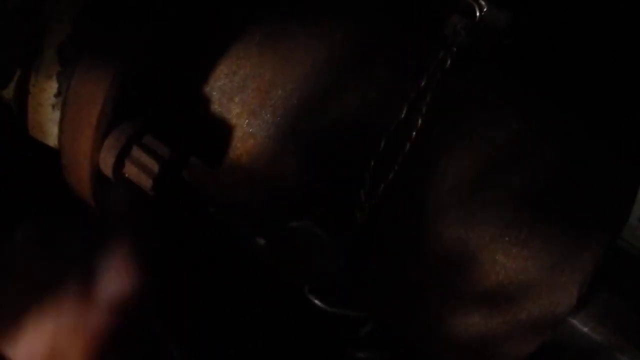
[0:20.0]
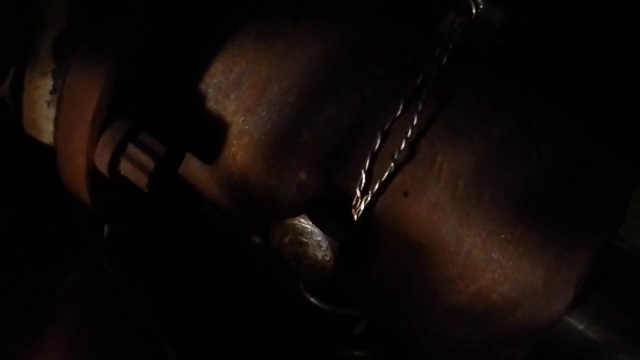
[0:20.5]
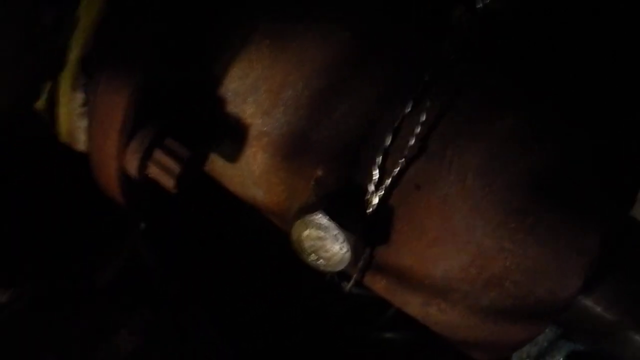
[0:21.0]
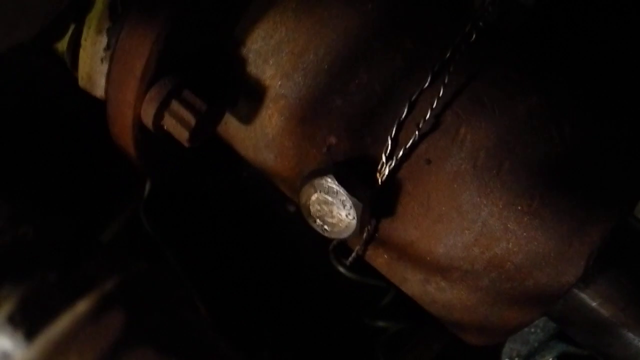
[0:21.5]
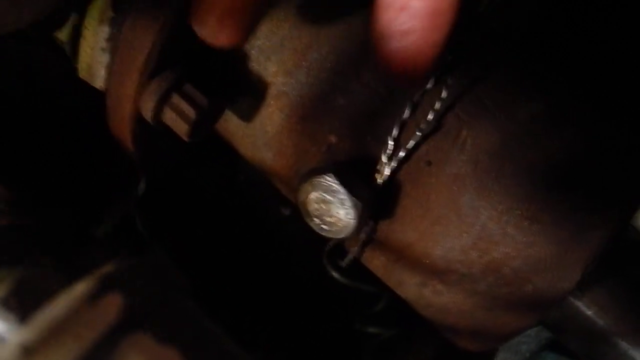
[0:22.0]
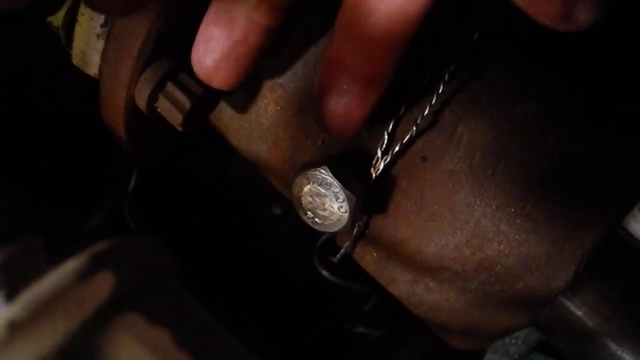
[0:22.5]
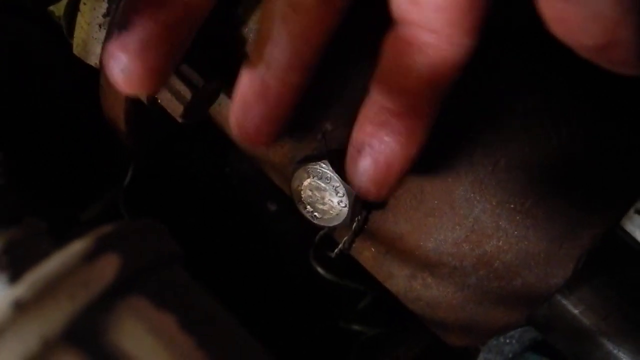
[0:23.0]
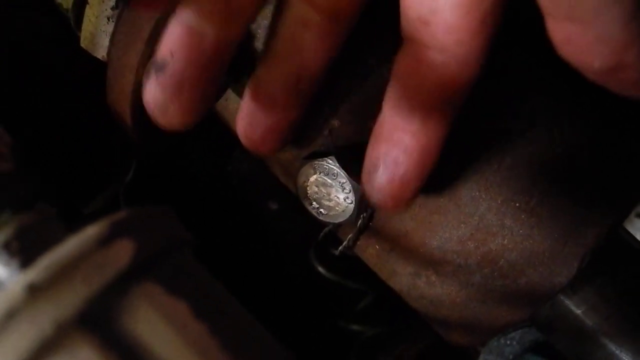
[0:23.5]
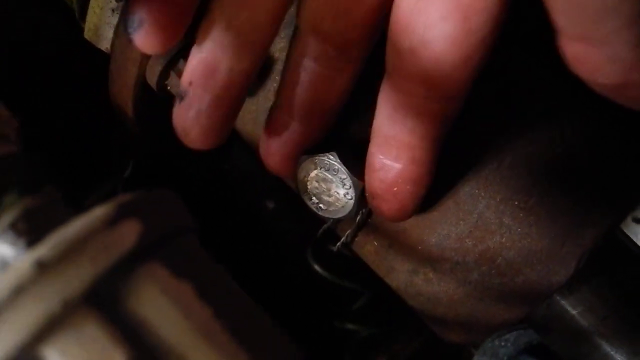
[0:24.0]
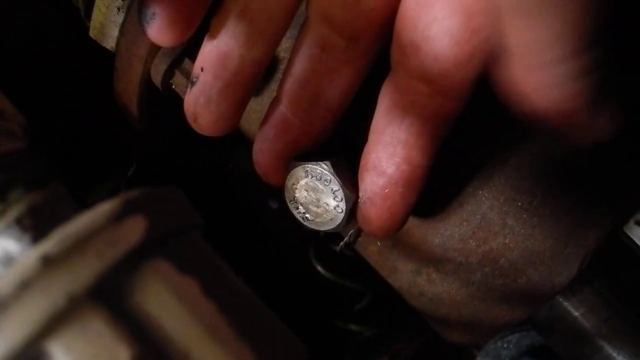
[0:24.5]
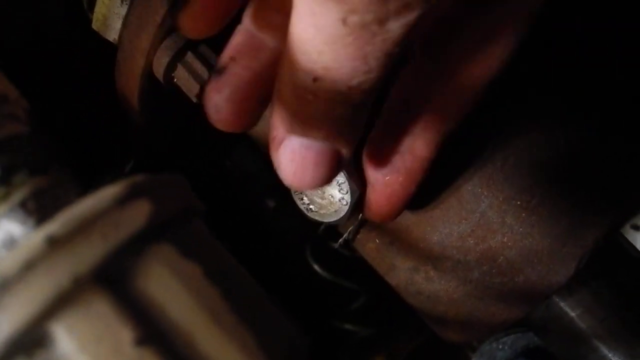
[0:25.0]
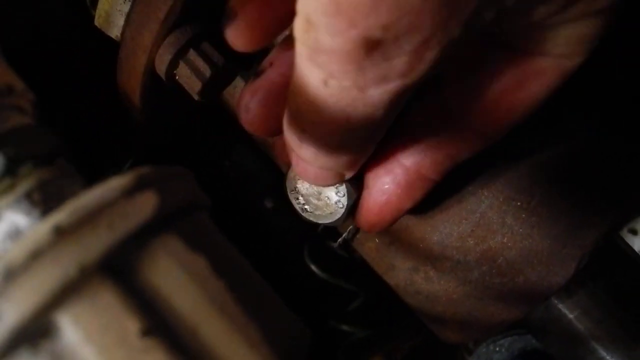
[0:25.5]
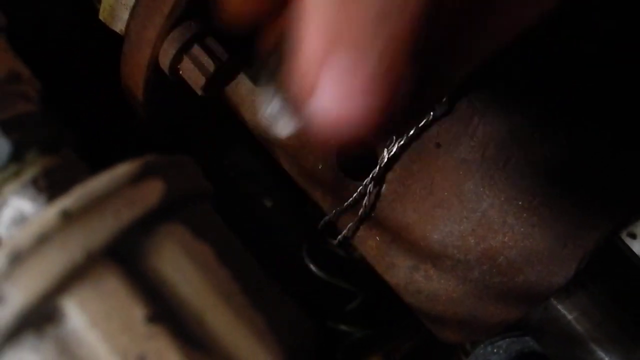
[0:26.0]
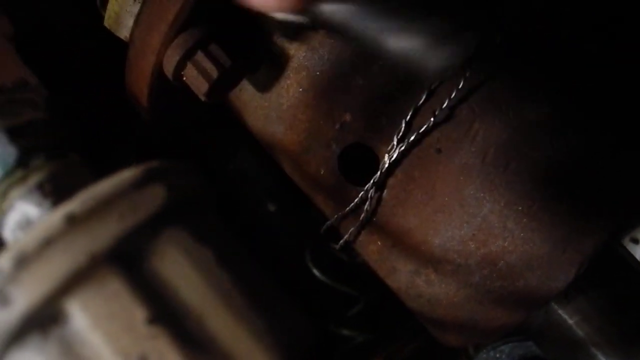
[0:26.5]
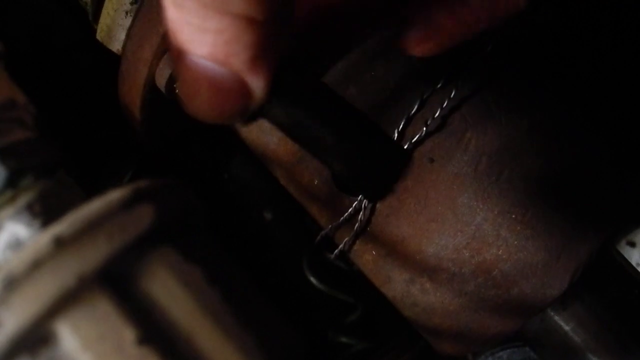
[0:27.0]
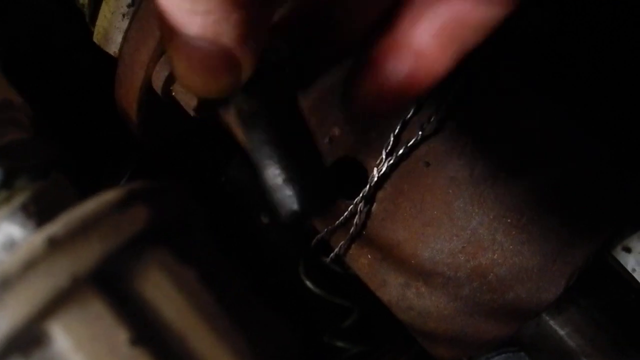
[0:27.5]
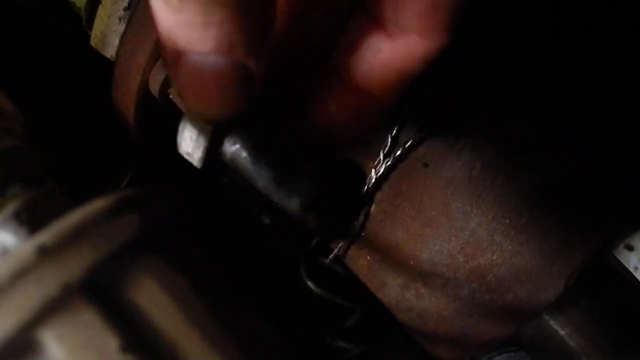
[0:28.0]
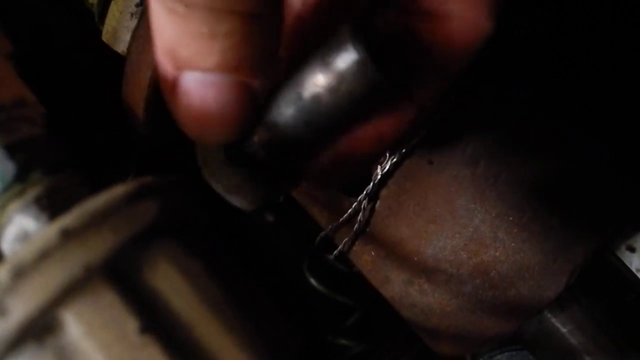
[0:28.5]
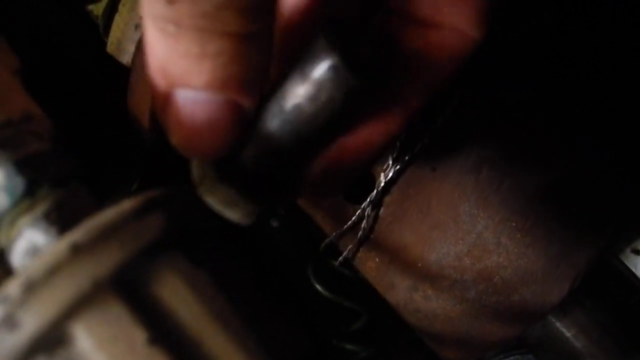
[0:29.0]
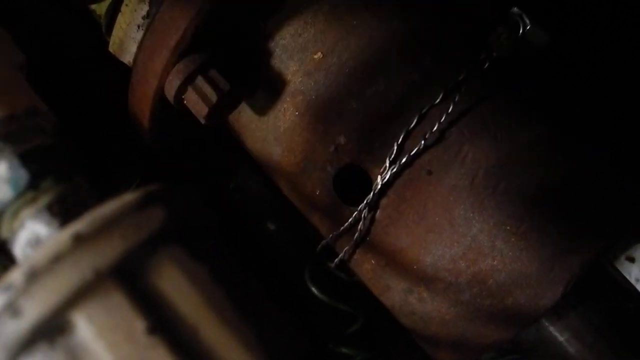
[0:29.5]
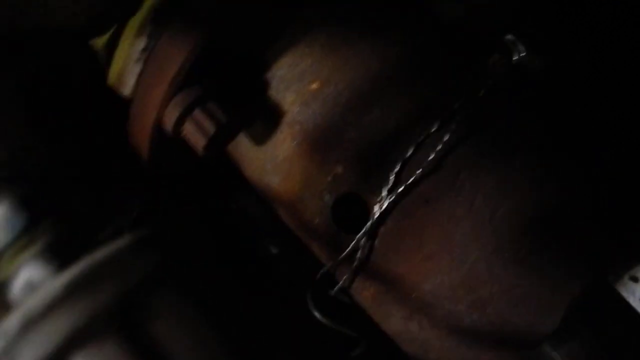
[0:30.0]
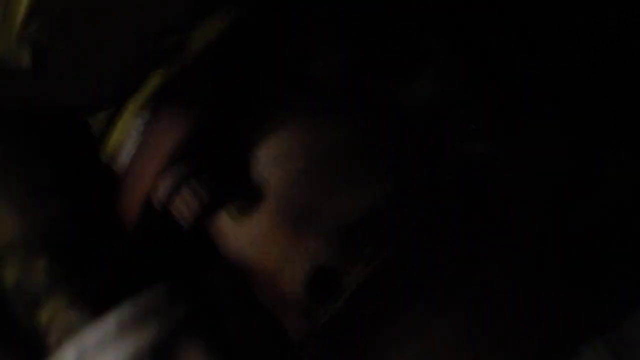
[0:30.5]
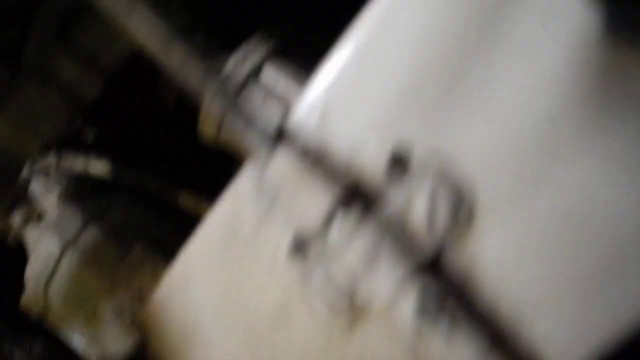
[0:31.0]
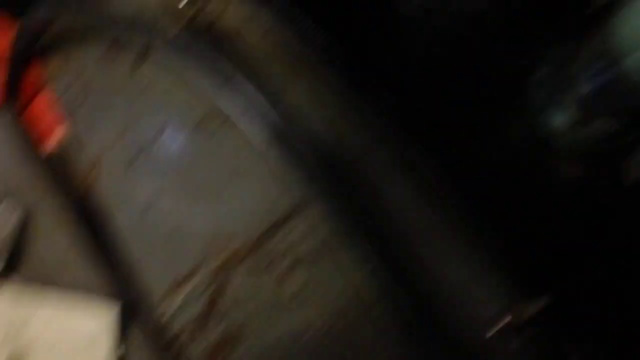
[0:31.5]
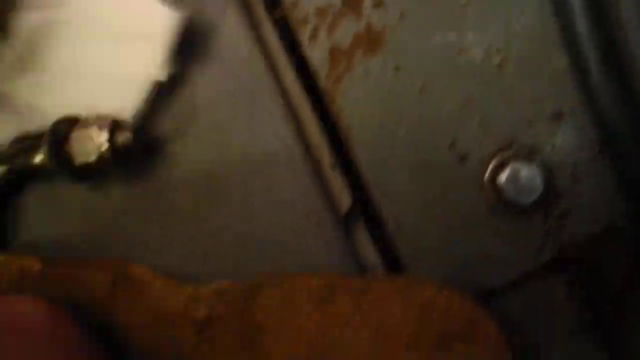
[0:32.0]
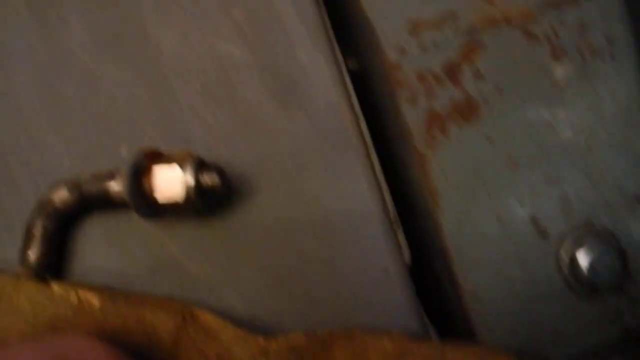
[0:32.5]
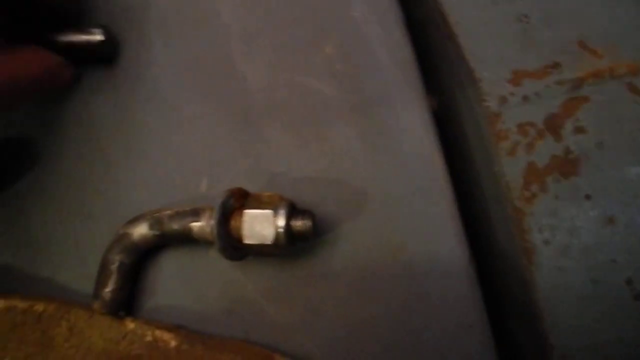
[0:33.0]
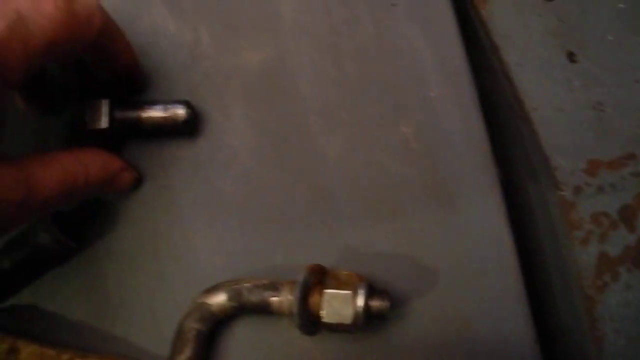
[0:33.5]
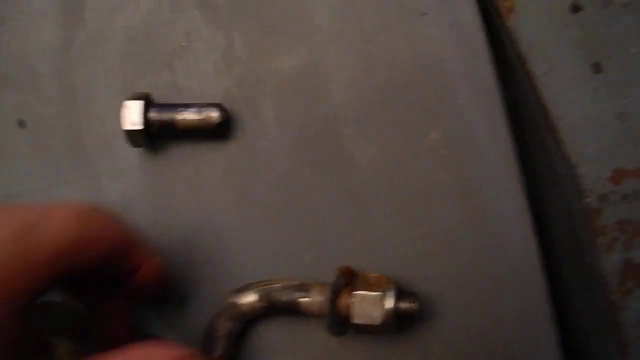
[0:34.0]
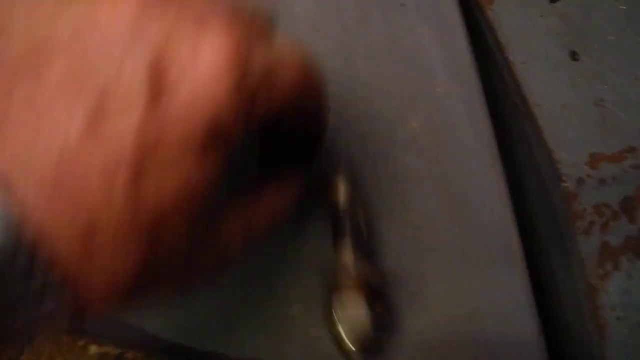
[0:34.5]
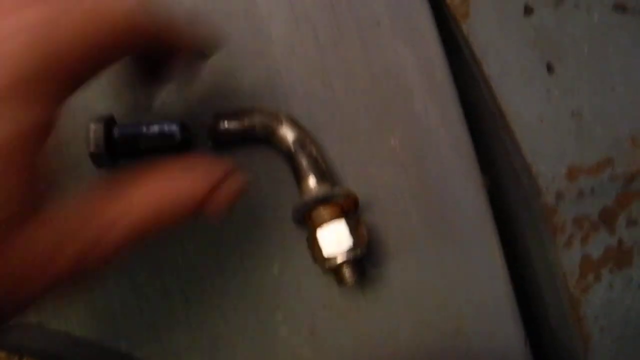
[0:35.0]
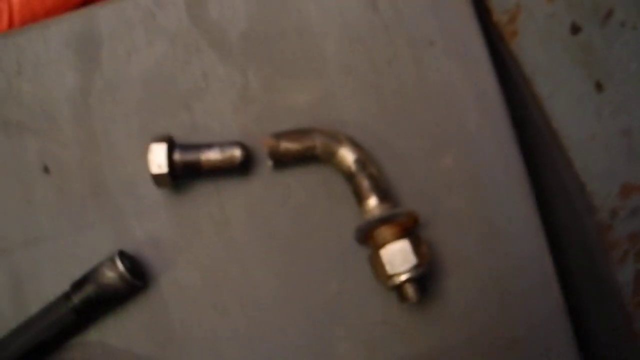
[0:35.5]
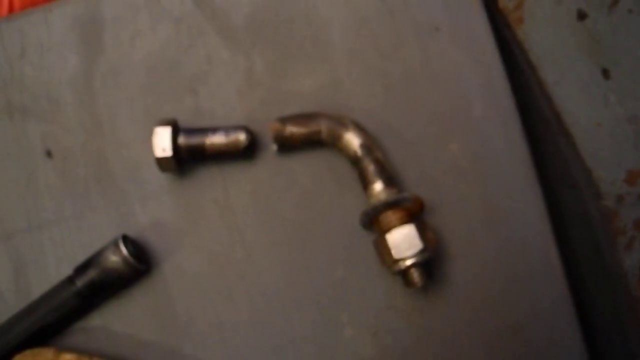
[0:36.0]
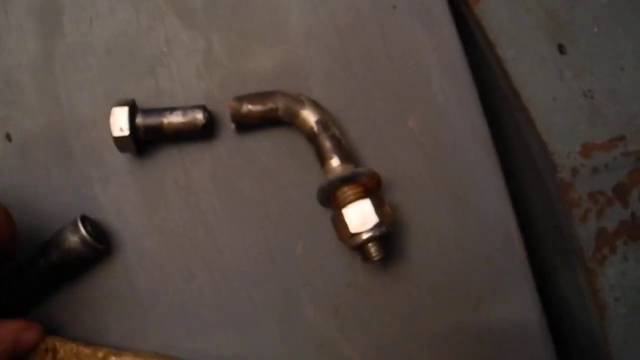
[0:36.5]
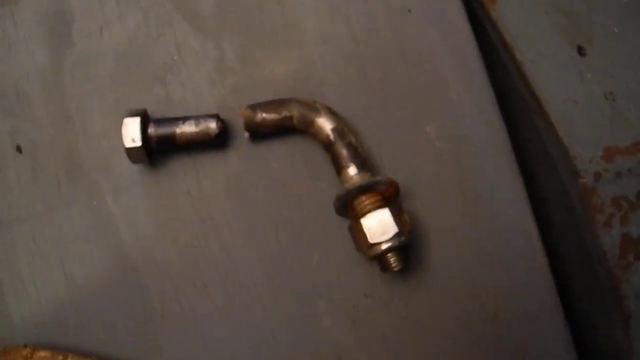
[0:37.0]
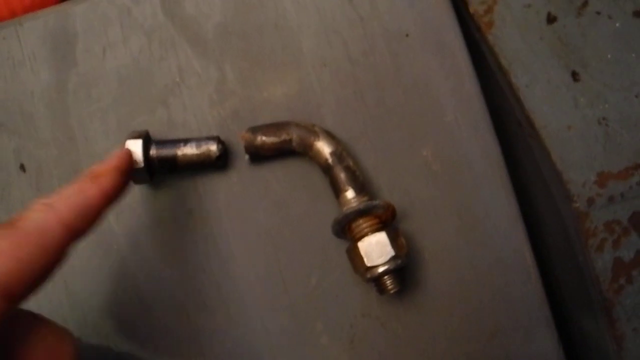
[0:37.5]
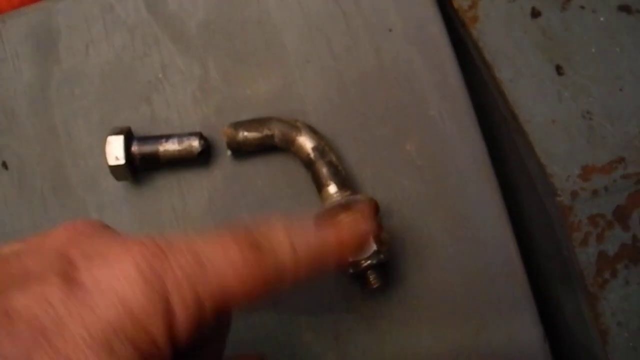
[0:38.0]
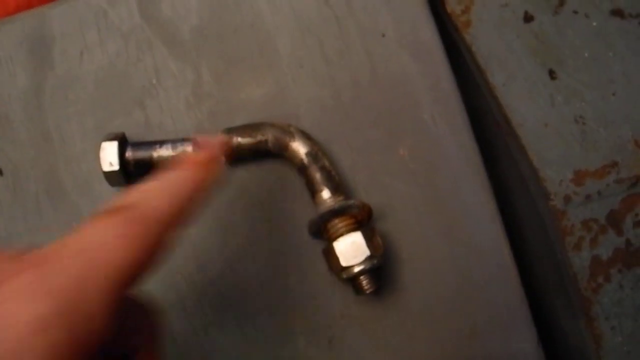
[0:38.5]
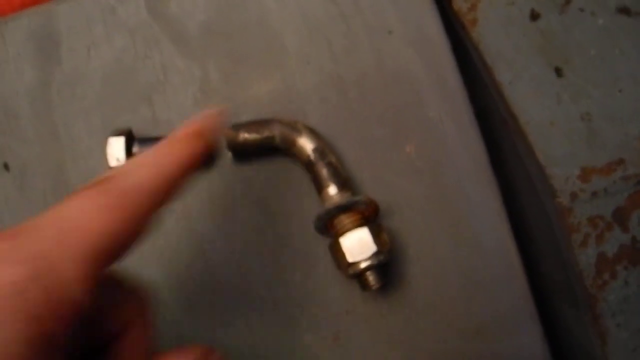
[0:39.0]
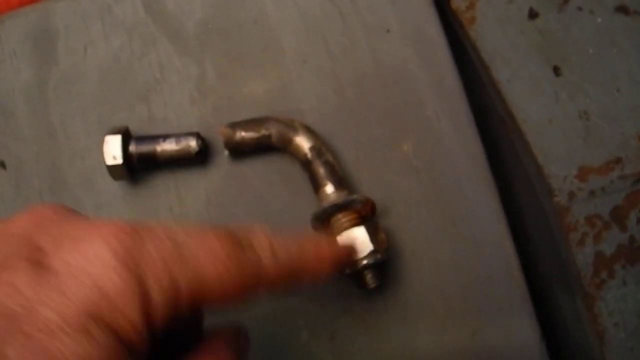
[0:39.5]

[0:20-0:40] The shot shows the inside of a car or something, very zoomed in on a cylindrical rusty metal piece with what looks like a silver piece of wire or silver string going around it. A person's left hand briefly comes into the frame from the bottom left of the screen. Then the person's left fingertips come down from the top of the screen, palm facing toward the screen. They put a silver bolt or nut between their index finger and thumb and pull it out, then grab it with their thumb on the top and pull it out. They spin it around between their index finger and thumb, and the camera pulls out of the engine. The left hand lays the bolt on a gray surface. There is another piece that looks like an L, and they pull it up to where it lines up with the bolt; it looks like a backward 7. With their left index finger, they show how they run it across the bolt and the backward 7 pipe piece.